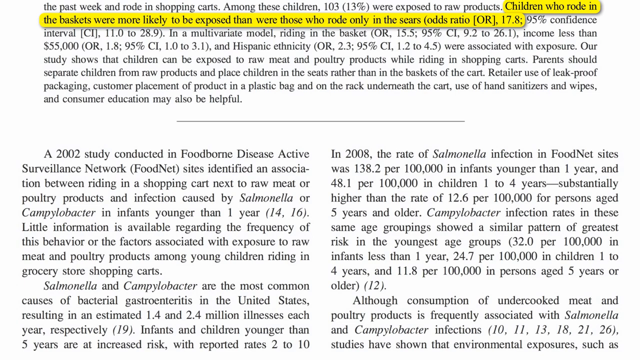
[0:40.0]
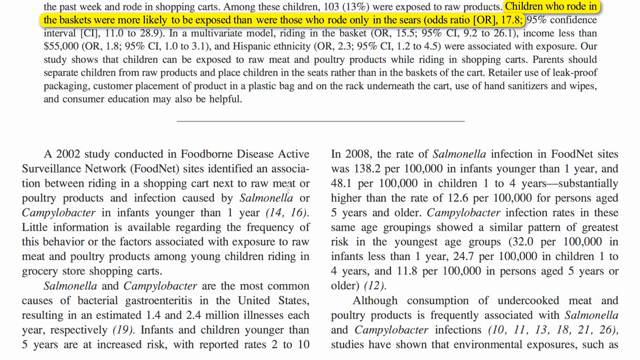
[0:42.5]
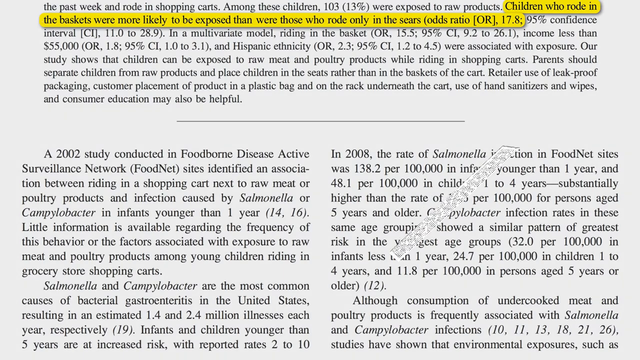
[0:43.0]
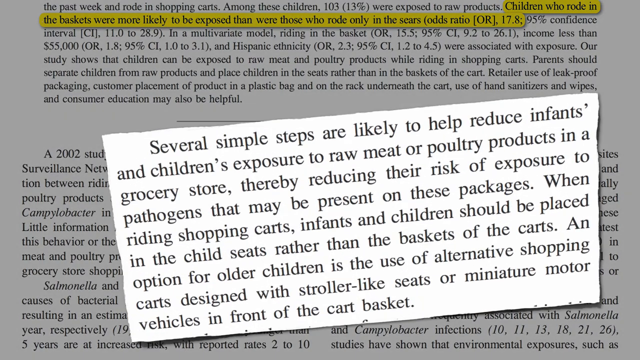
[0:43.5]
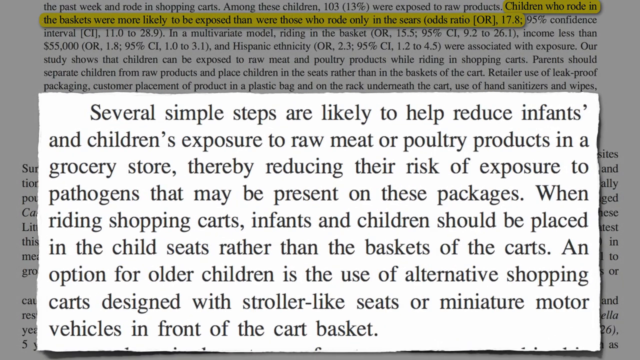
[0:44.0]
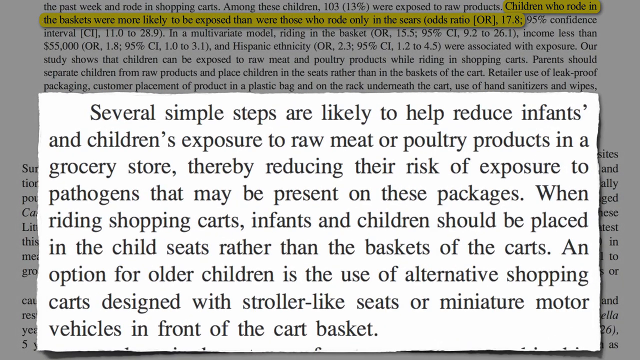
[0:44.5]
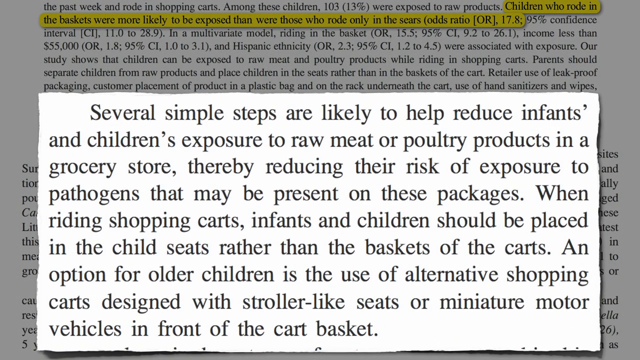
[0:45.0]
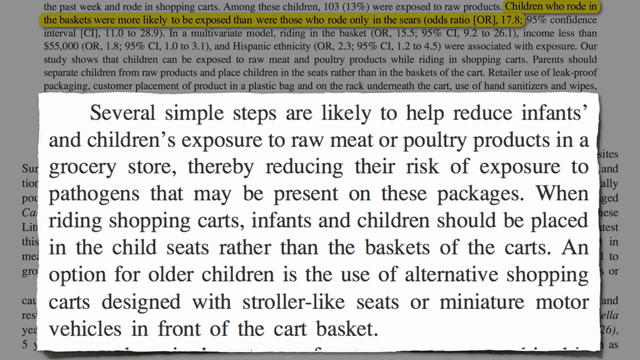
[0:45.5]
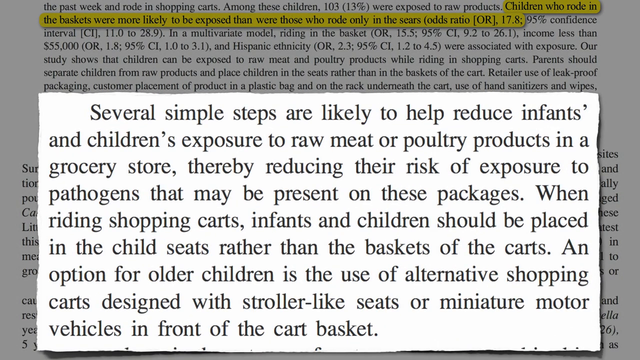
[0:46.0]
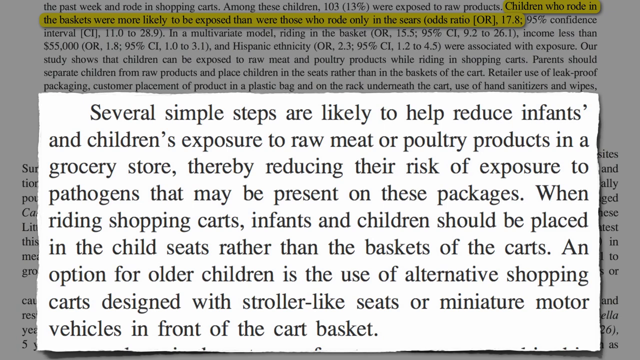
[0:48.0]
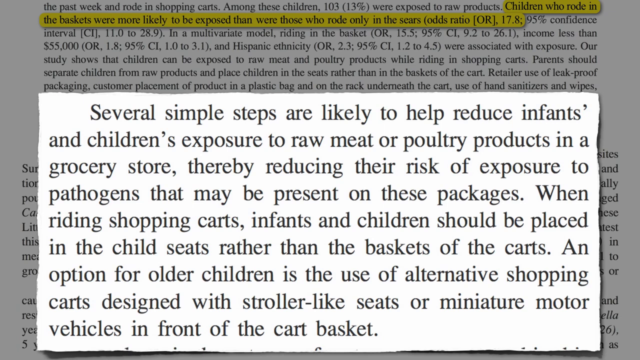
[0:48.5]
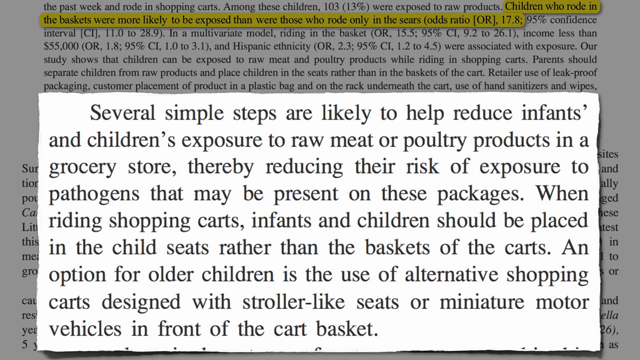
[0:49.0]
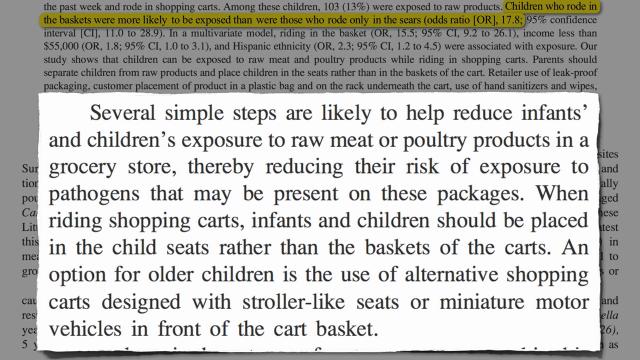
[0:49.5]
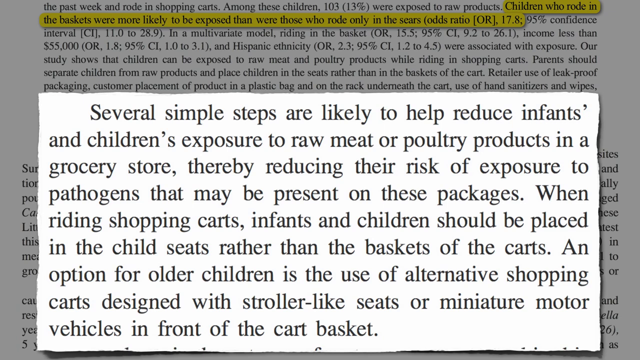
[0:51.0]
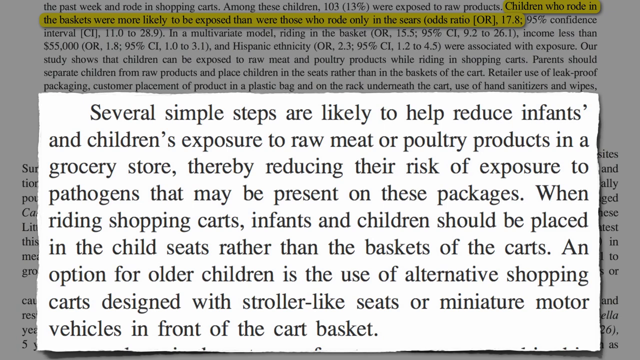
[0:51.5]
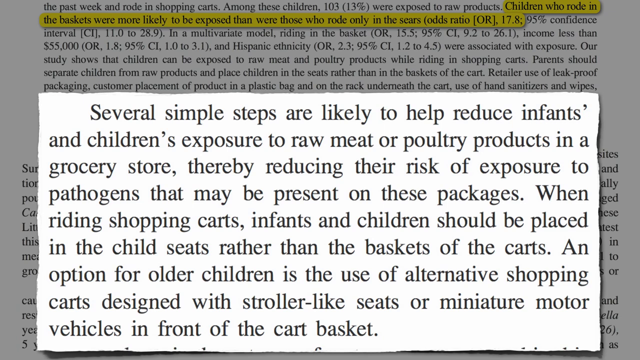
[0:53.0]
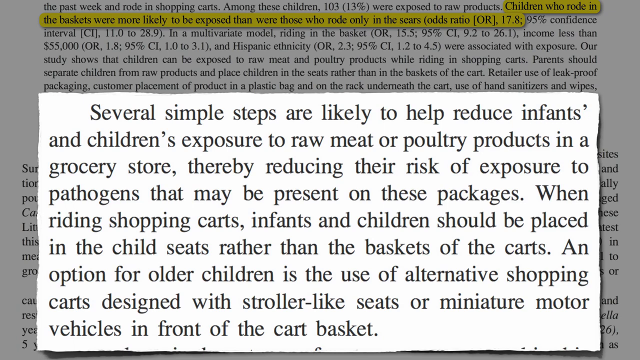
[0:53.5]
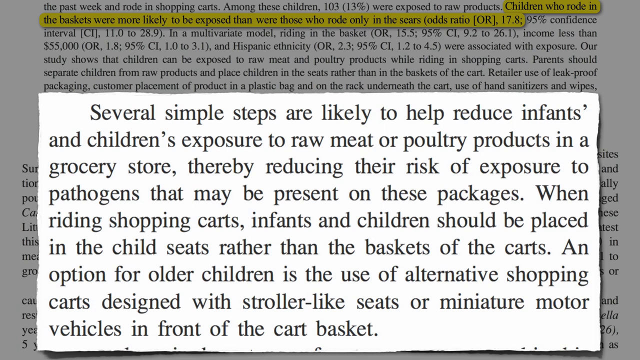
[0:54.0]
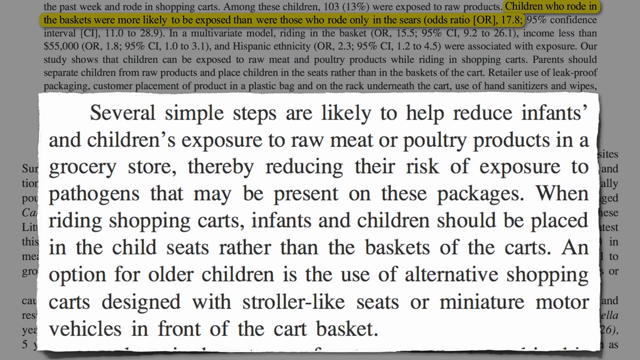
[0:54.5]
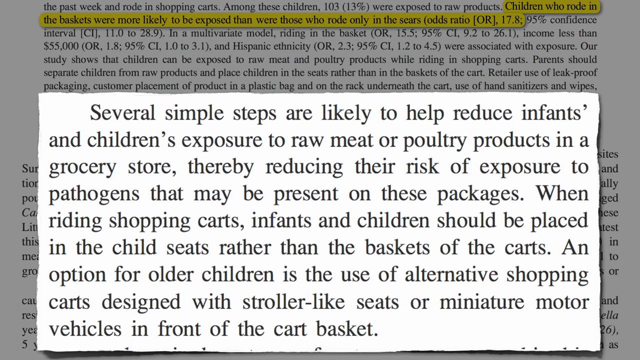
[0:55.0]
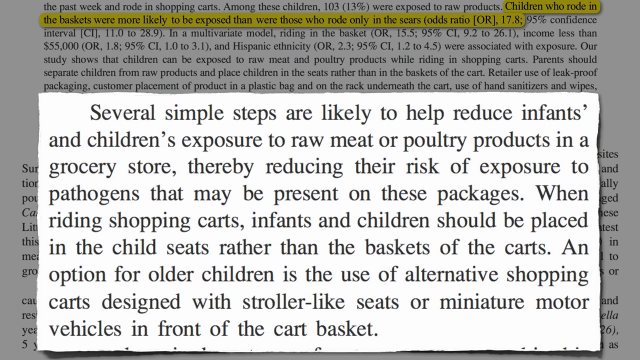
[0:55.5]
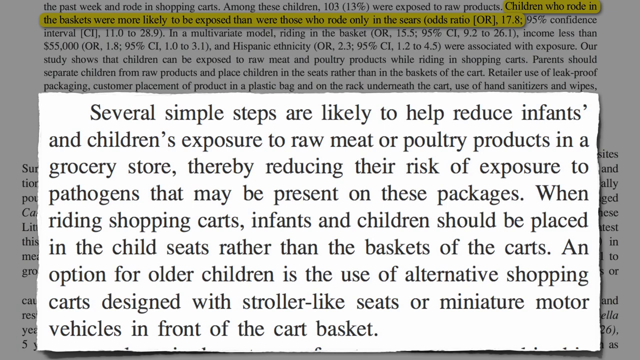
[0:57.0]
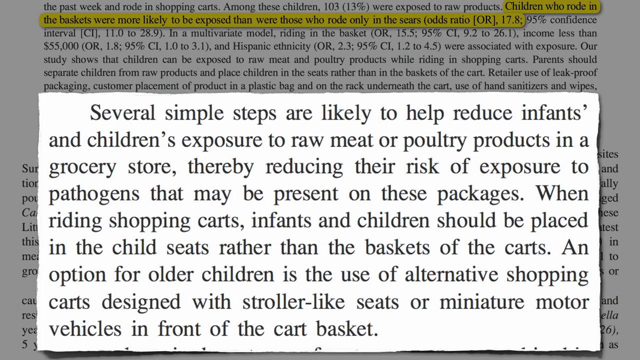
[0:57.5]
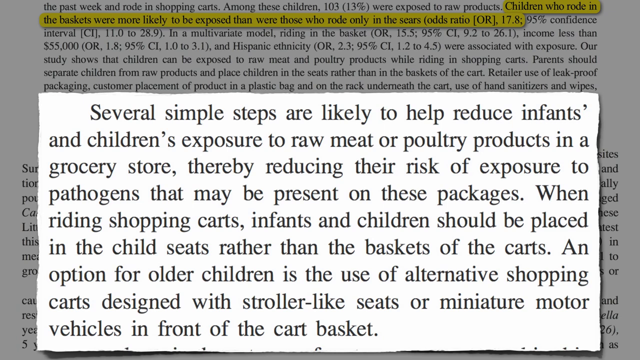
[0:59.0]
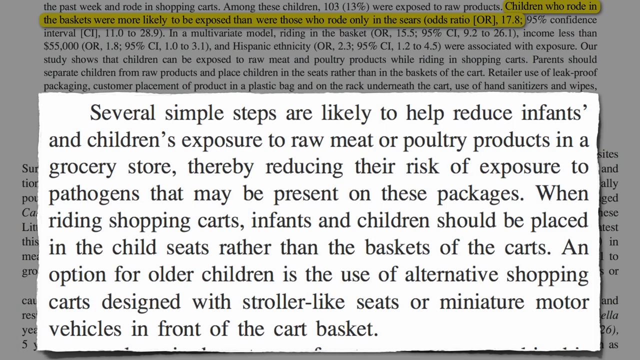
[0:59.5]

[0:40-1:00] The view remains on what looks like a medical journal, with words highlighted on the page: "children who rode in the baskets were more likely to be exposed than were those who rode only in the," with an odds ratio of 17.8. A pop-up screen then appears with a white background and black lettering that reads: "Several simple steps are likely to help reduce infants and children's exposure to raw meat or poultry products in a grocery store, thereby reducing their risk of exposure to pathogens that may be present on these packages. When riding shopping carts, infants and children should be placed in the child seats rather than the baskets of the carts. An option for older children is the use of alternative shopping carts designed with stroller-like seats or miniature motor vehicles in front of the cart basket." The message stays on the screen, static.